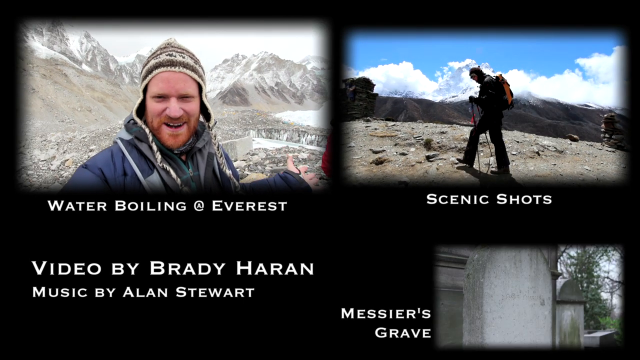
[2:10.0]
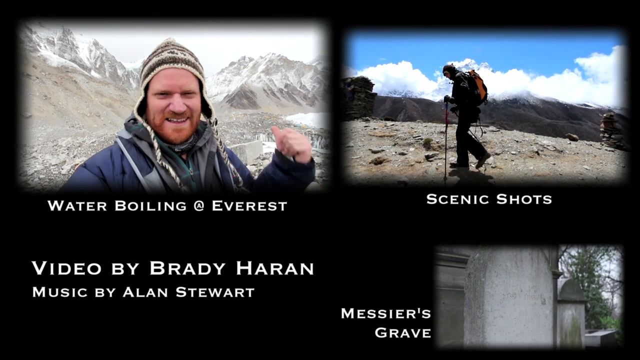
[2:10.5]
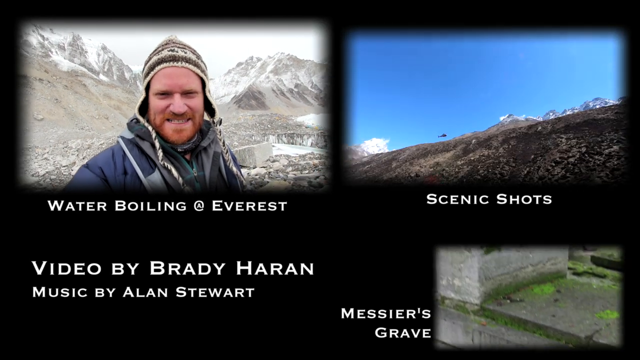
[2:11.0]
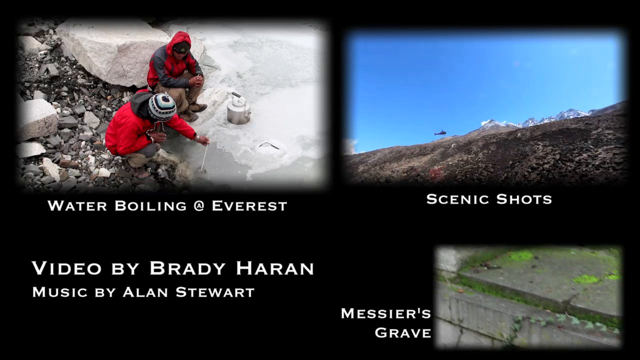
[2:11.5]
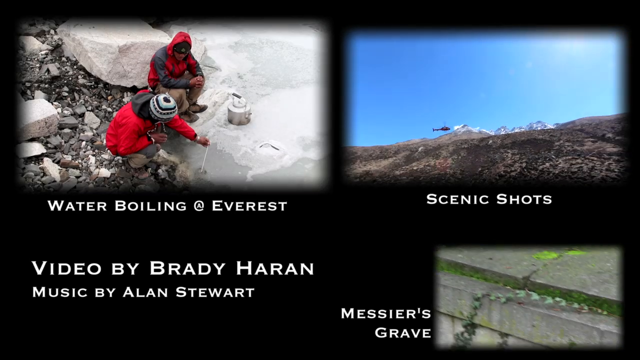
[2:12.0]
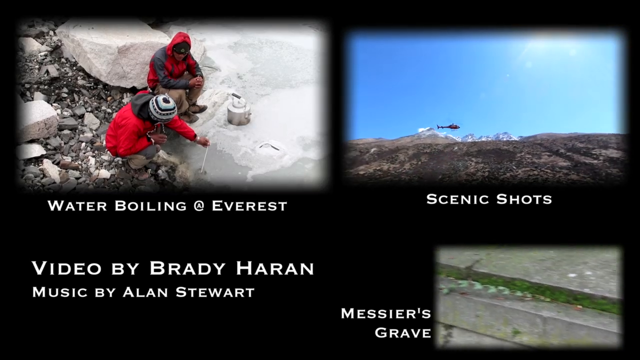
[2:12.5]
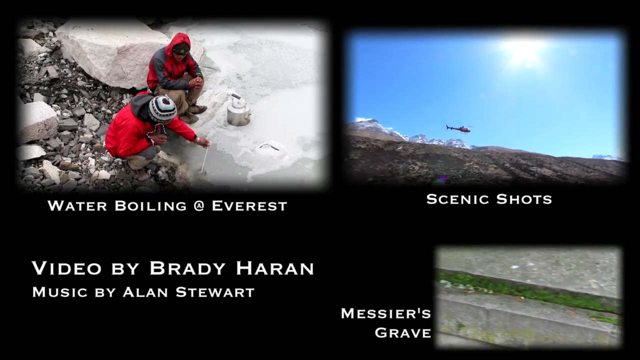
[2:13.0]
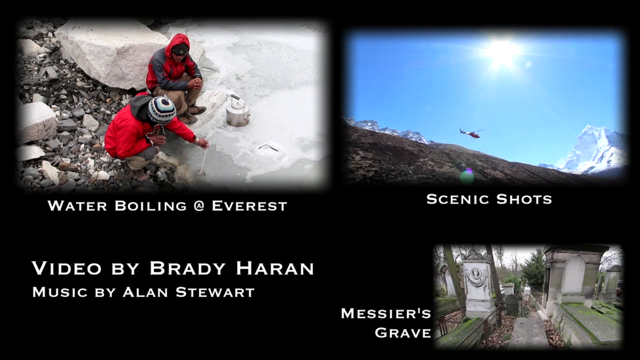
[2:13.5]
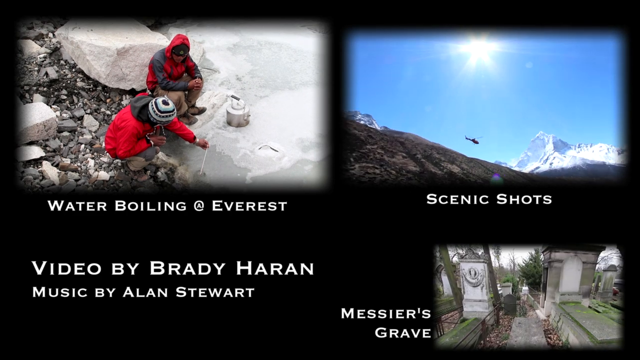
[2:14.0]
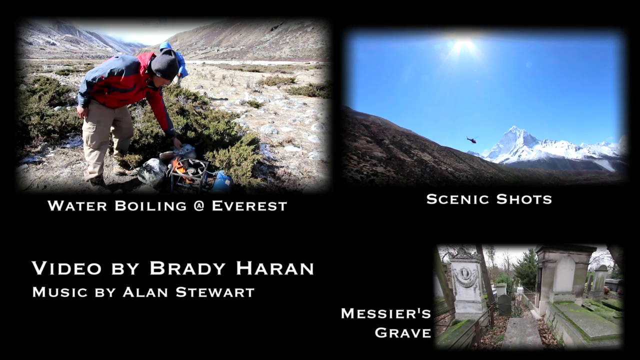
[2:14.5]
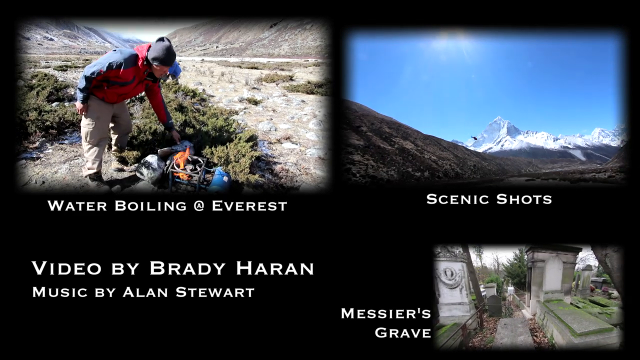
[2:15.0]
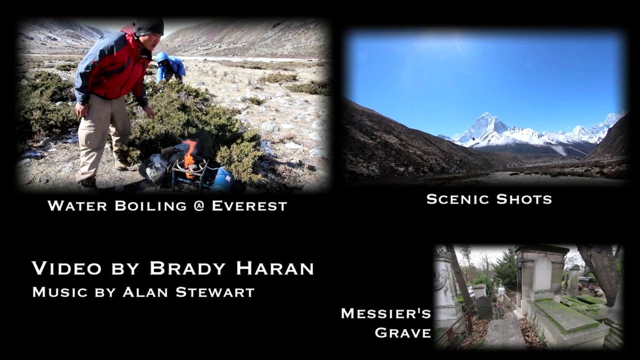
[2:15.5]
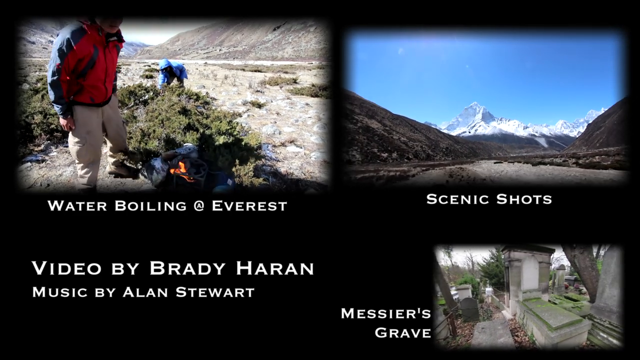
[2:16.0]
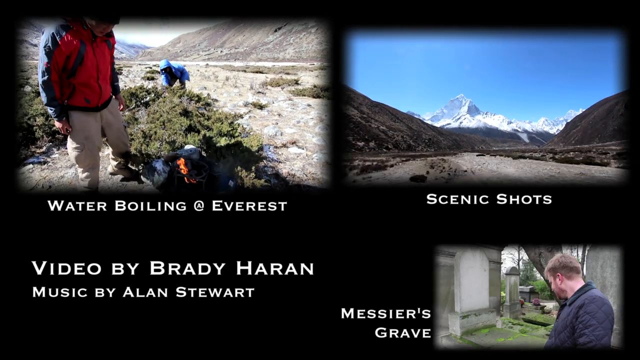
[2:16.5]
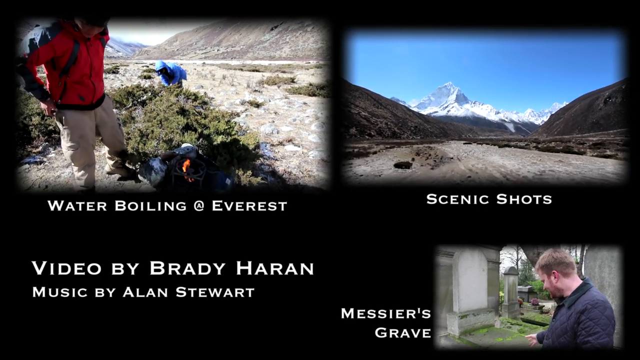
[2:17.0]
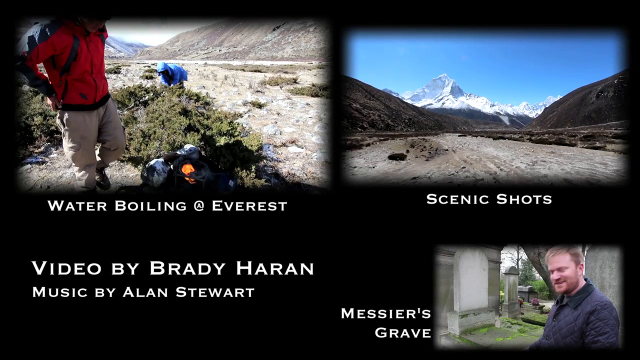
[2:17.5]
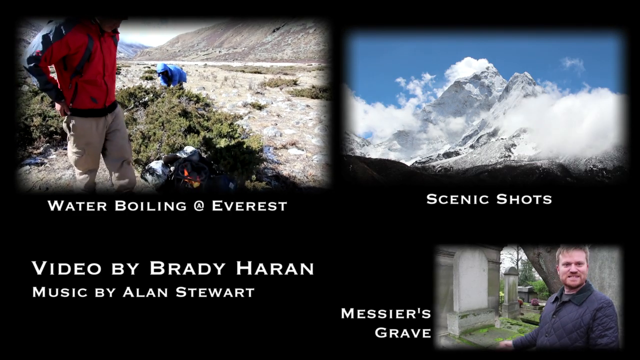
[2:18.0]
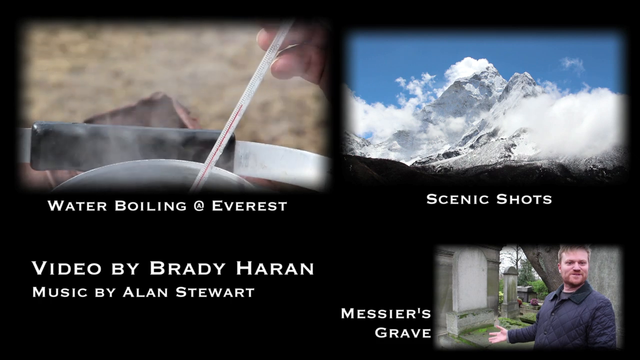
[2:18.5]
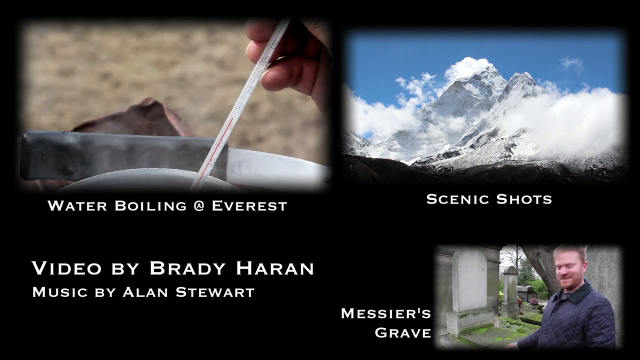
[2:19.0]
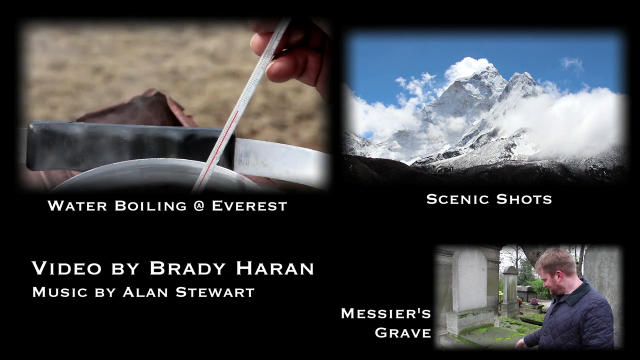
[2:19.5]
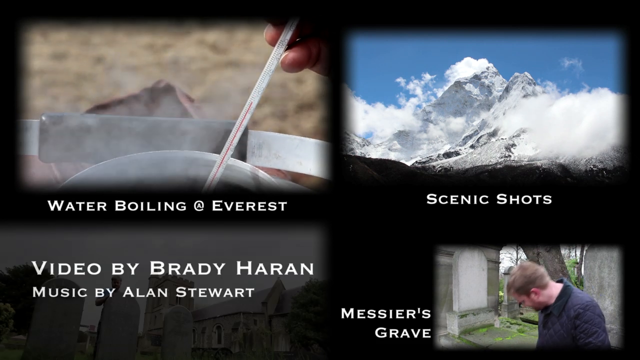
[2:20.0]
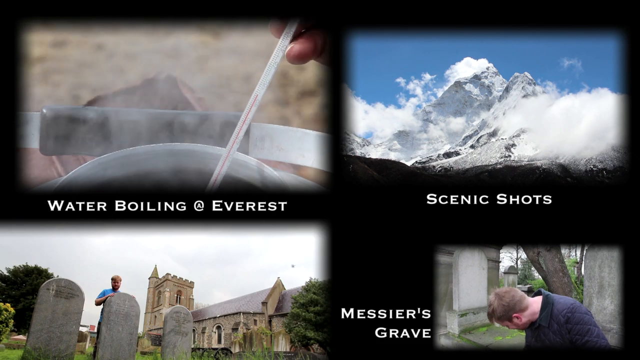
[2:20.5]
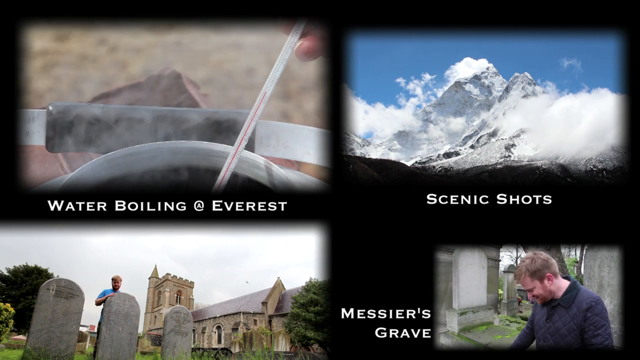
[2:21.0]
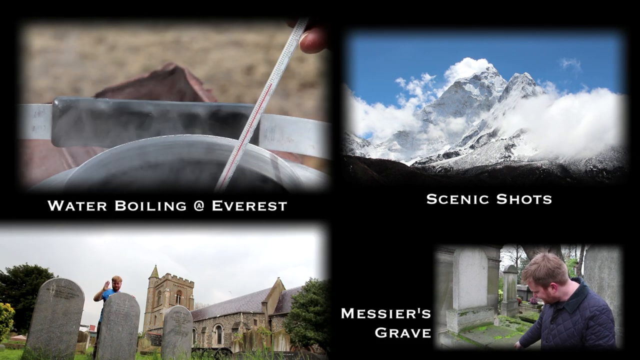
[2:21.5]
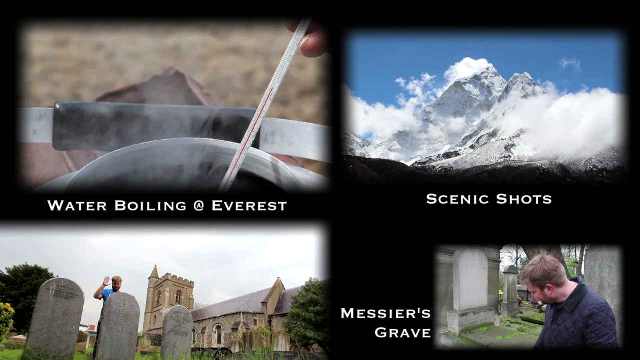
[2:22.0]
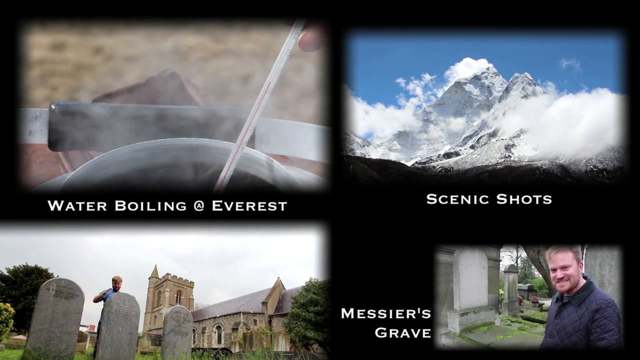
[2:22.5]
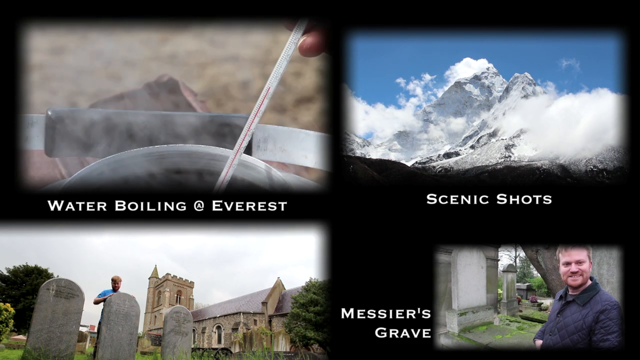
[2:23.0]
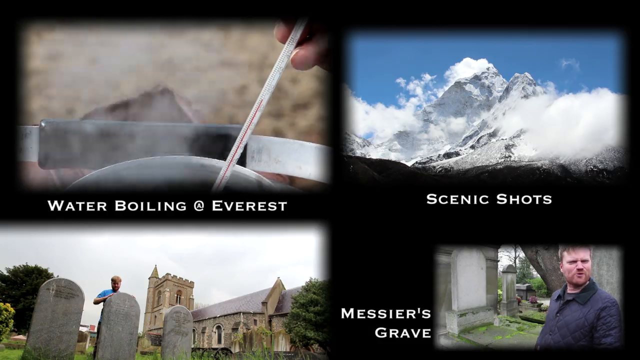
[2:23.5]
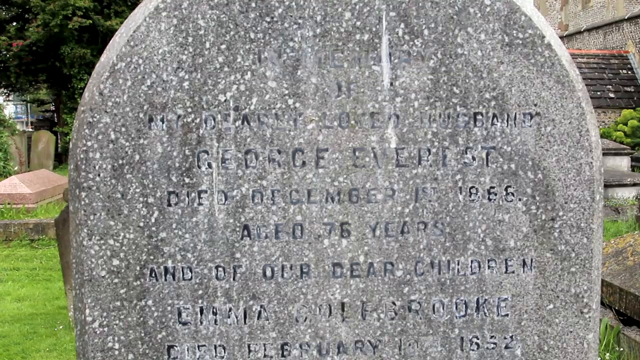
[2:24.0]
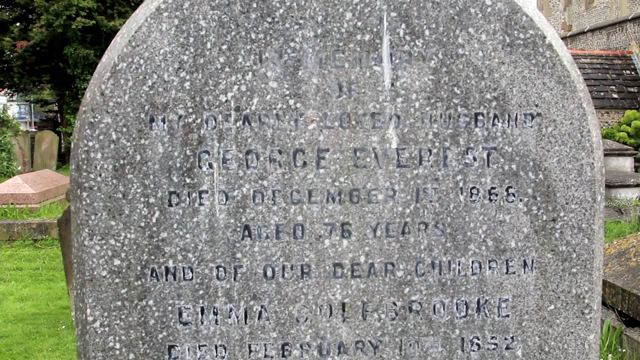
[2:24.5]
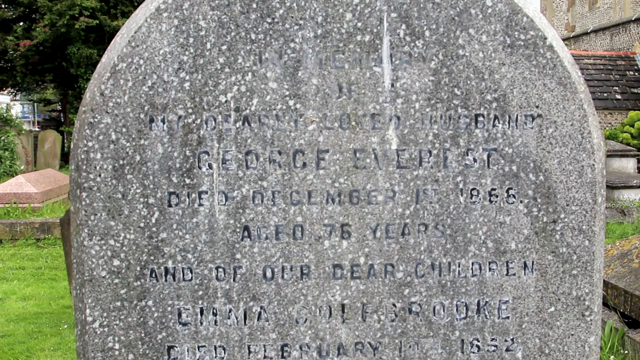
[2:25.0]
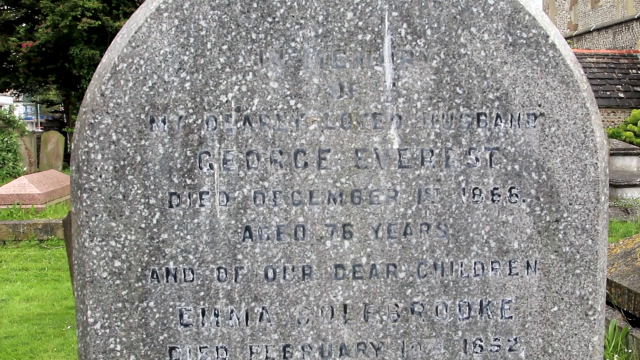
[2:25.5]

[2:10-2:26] The closing credits show a black background with three video insets in the upper left, upper right and lower right; then a fourth inset of the cemetery pops up in the lower left. A close-up follows of George Everest's arched stone gravestone. White text in the lower right reads "video by Brady Haran" and "music by Alan Stewart." The upper right inset has the caption "Scenic Shots" below it and shows outdoor scenic shots, including a helicopter crossing the sky near the mountains. The lower right inset has the caption "Messier's Grave" to its left and shows a man talking to the camera and pointing. All the text is in white capital letters of different sizes.